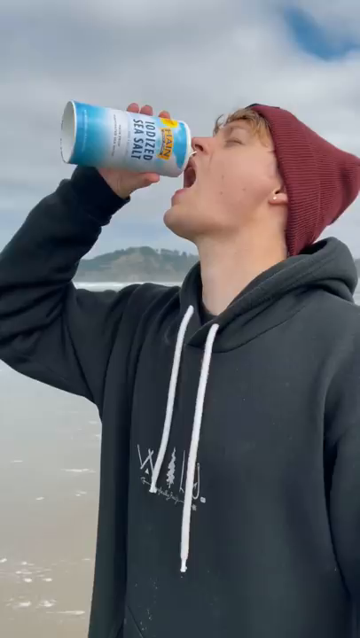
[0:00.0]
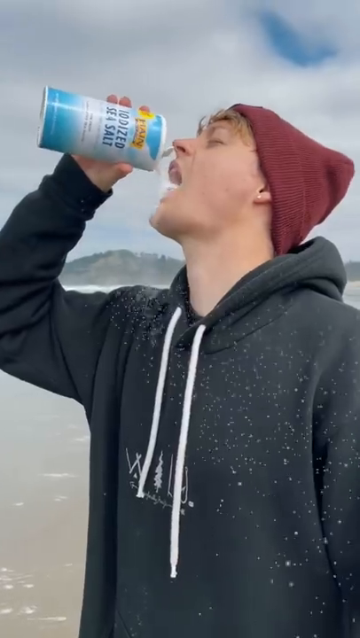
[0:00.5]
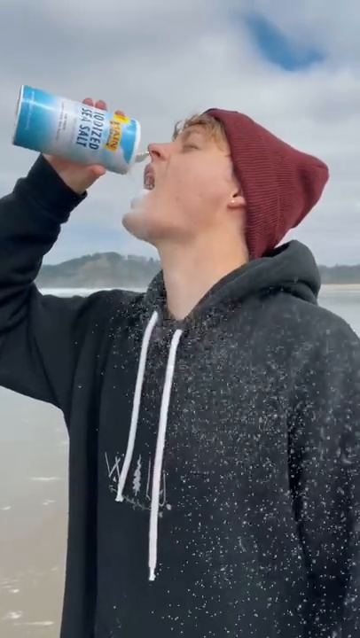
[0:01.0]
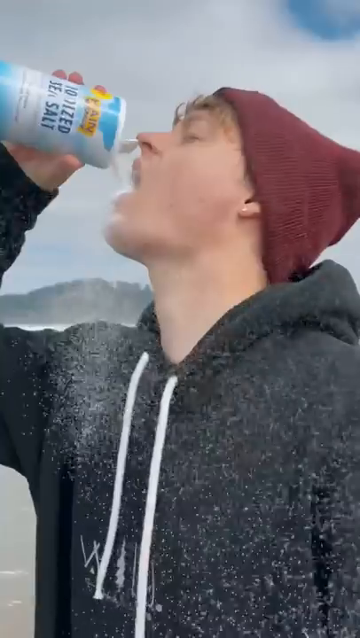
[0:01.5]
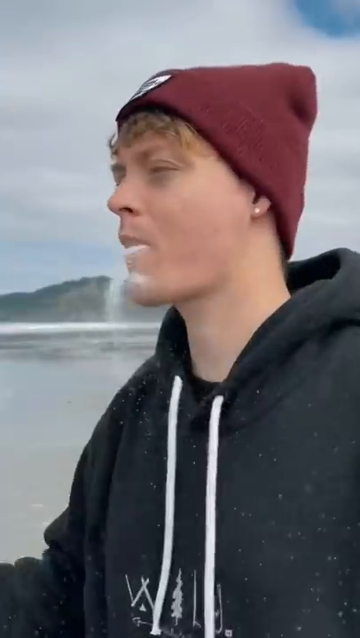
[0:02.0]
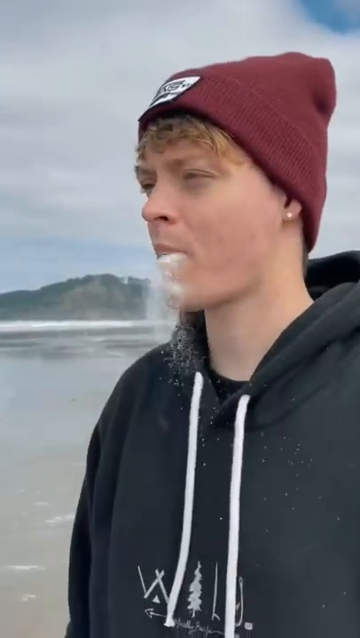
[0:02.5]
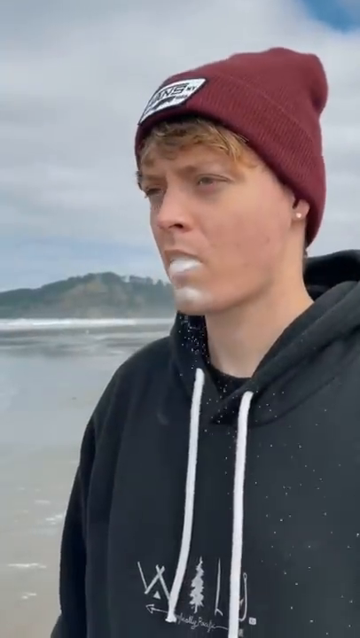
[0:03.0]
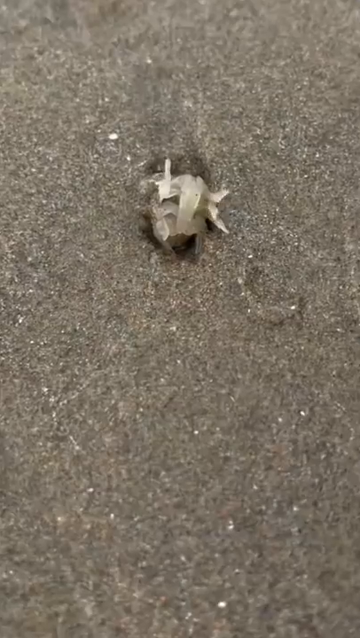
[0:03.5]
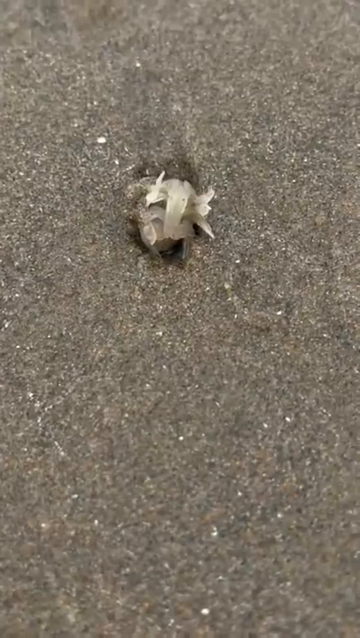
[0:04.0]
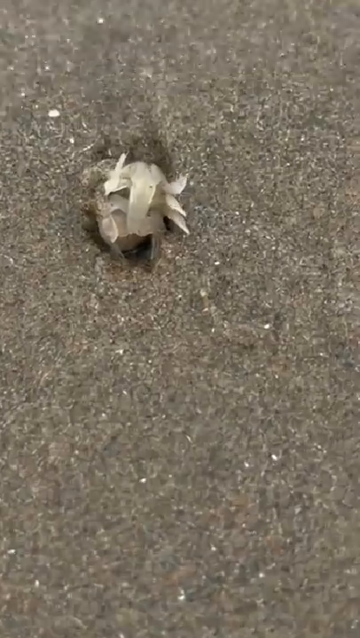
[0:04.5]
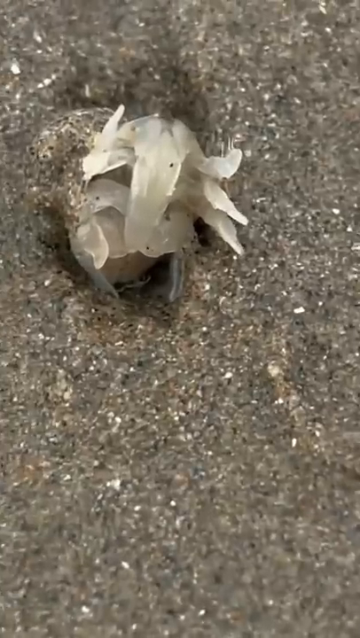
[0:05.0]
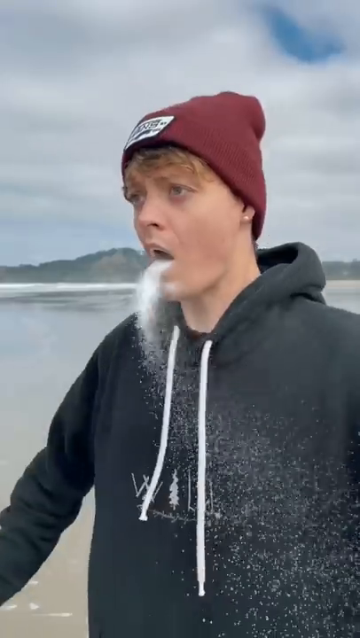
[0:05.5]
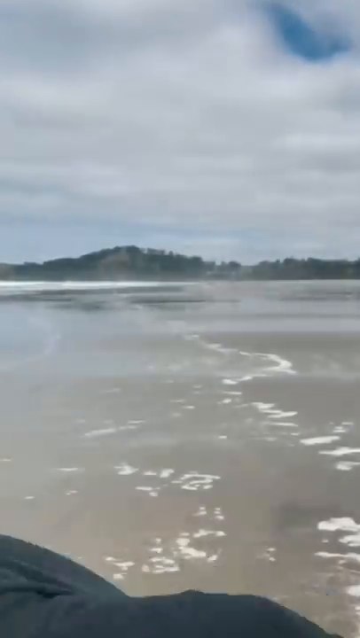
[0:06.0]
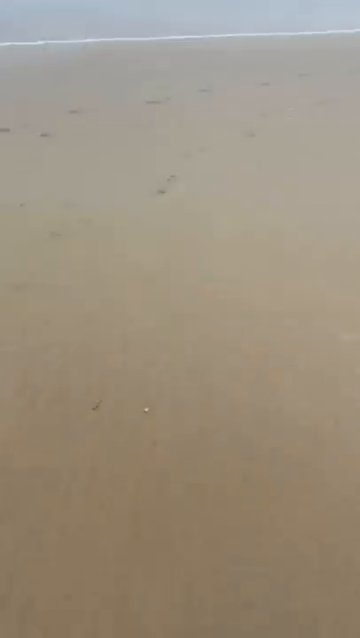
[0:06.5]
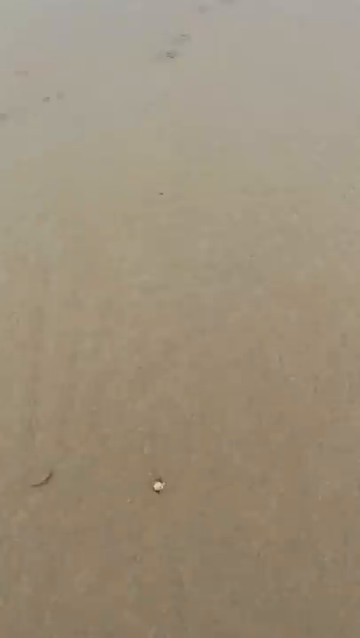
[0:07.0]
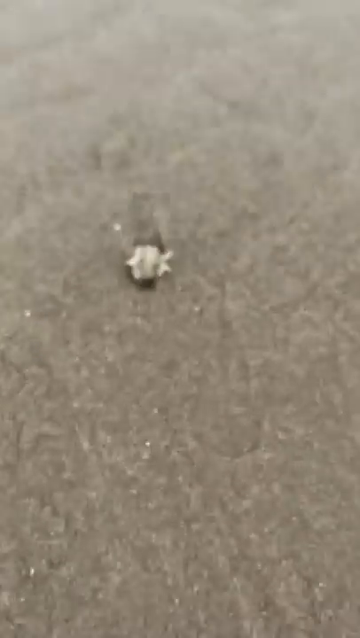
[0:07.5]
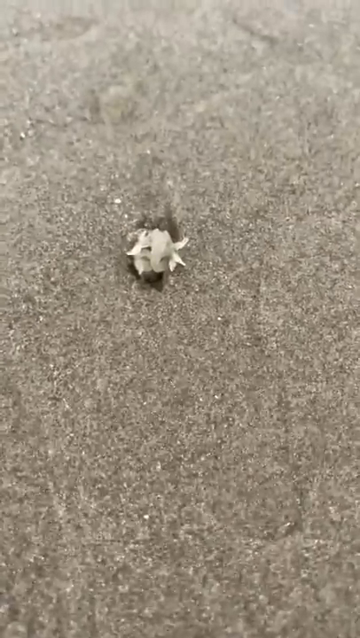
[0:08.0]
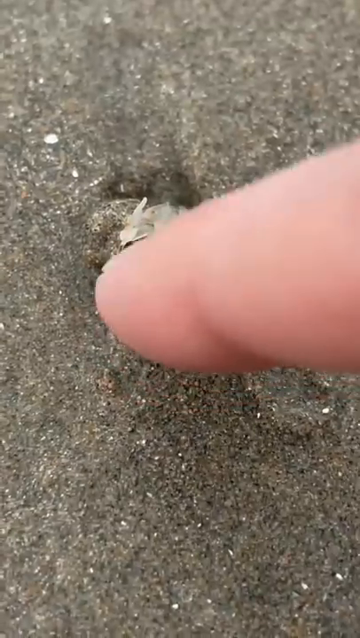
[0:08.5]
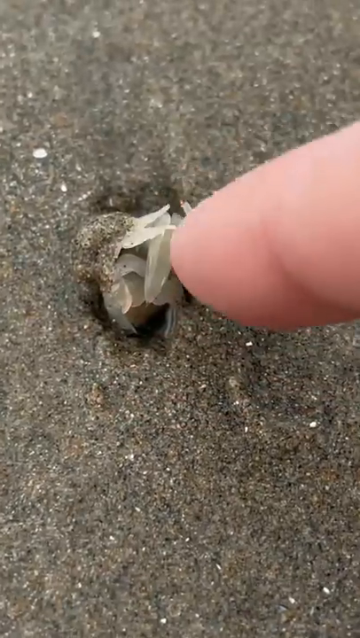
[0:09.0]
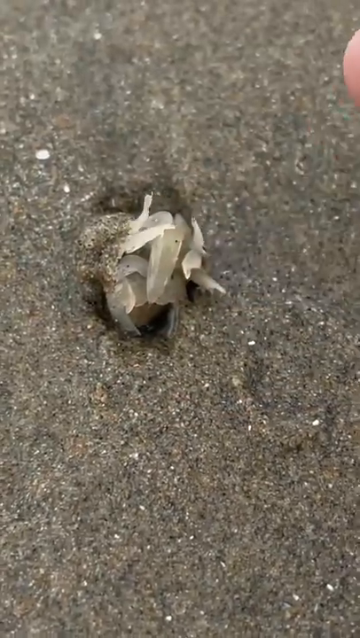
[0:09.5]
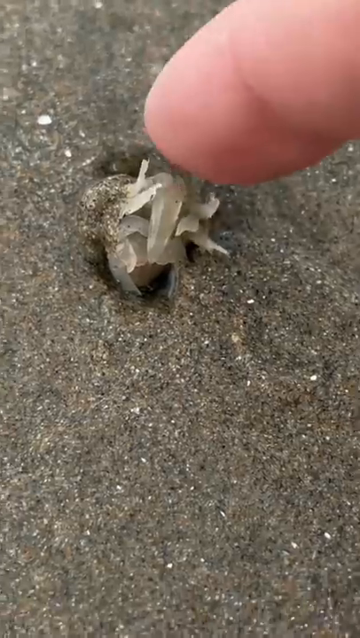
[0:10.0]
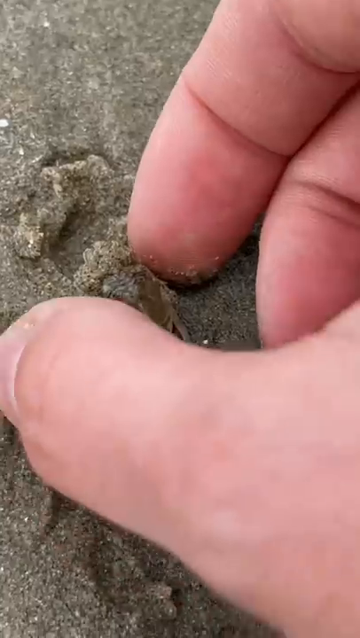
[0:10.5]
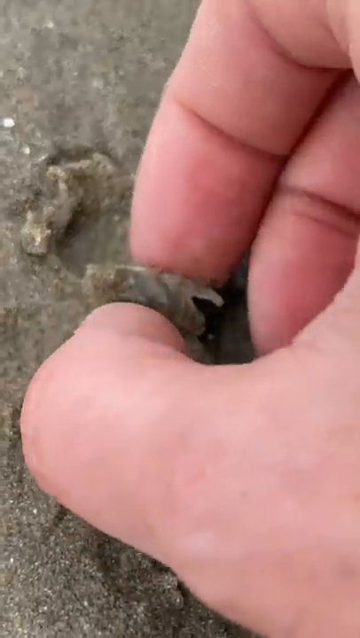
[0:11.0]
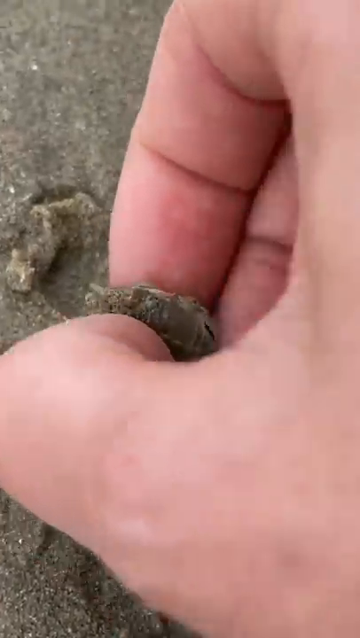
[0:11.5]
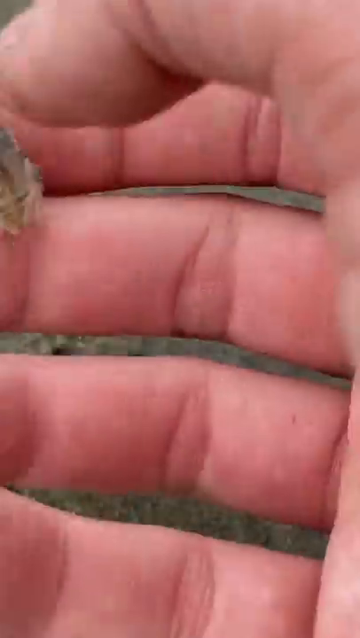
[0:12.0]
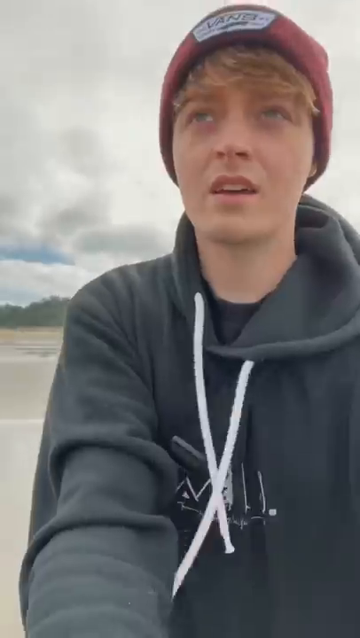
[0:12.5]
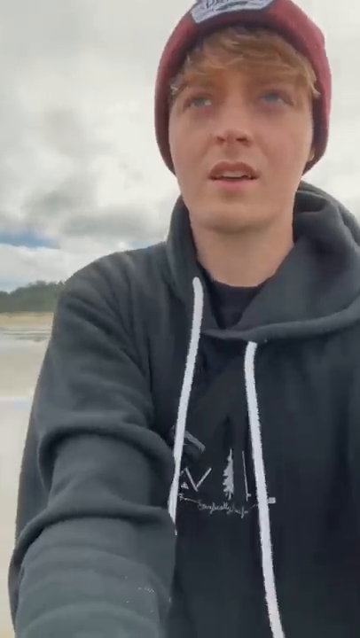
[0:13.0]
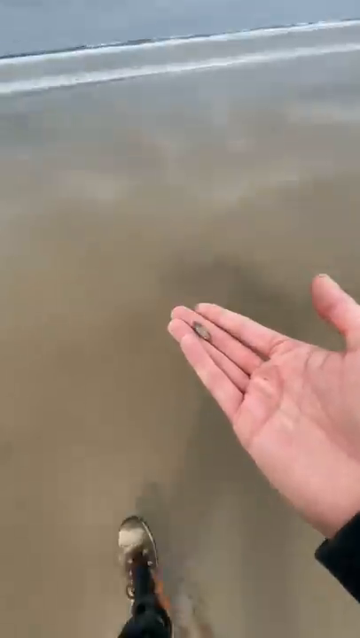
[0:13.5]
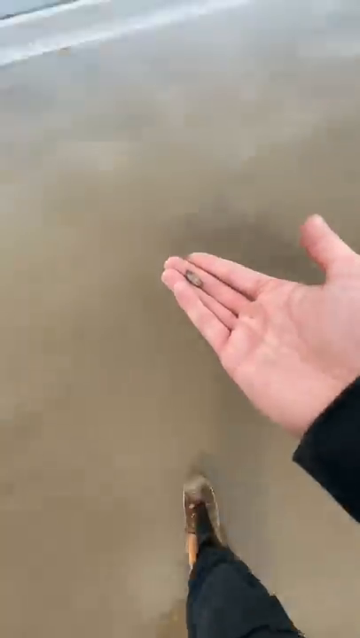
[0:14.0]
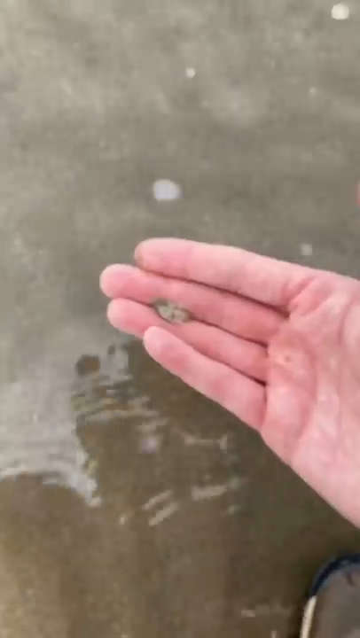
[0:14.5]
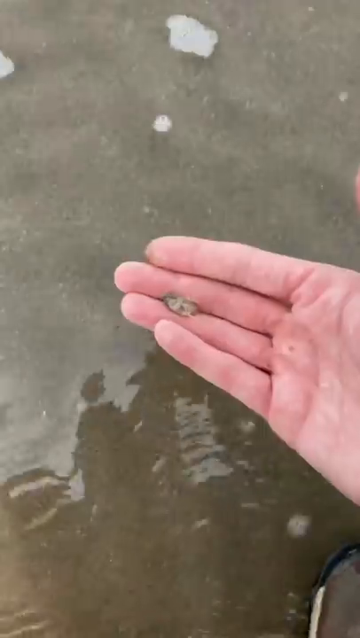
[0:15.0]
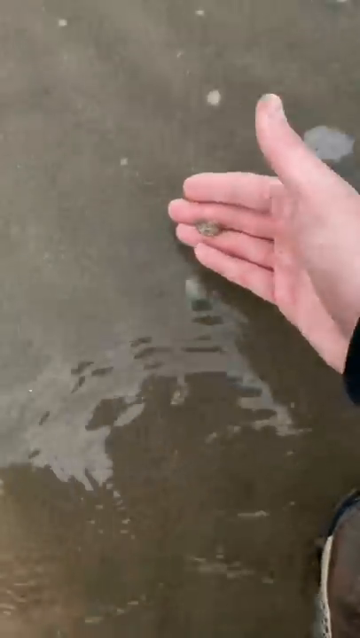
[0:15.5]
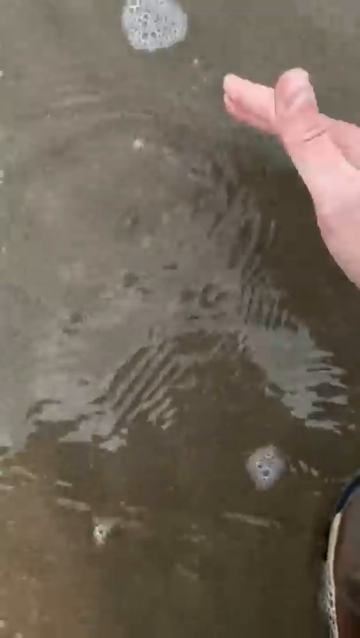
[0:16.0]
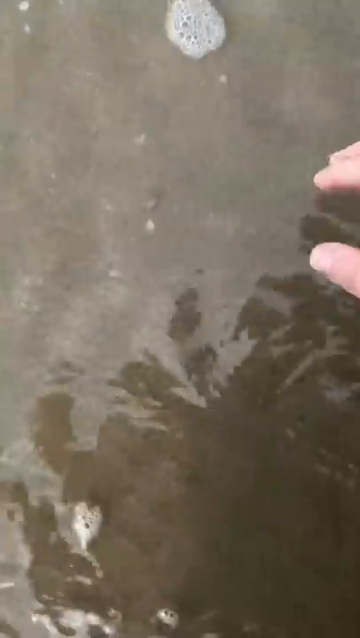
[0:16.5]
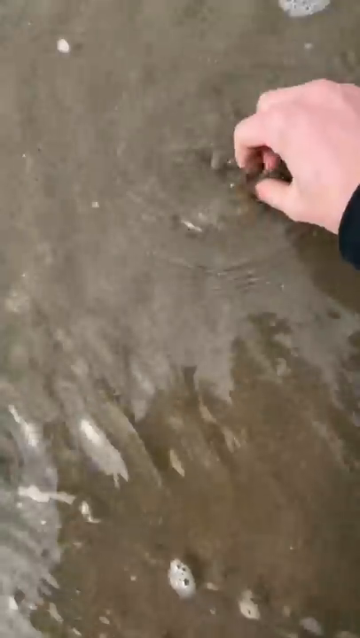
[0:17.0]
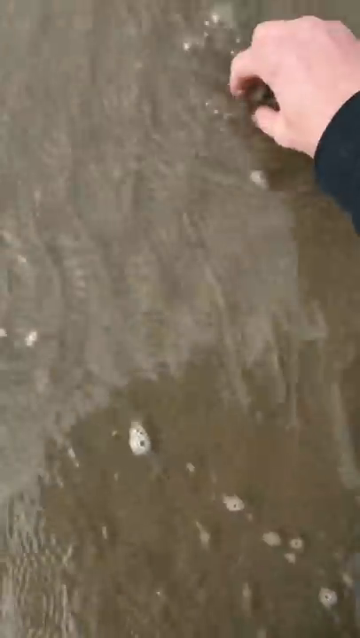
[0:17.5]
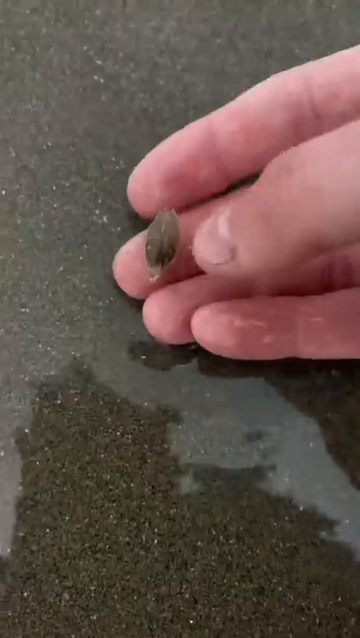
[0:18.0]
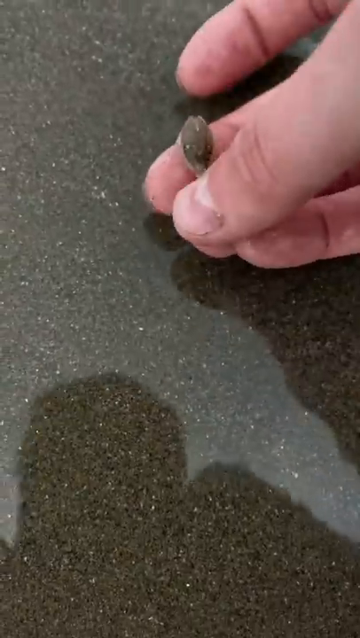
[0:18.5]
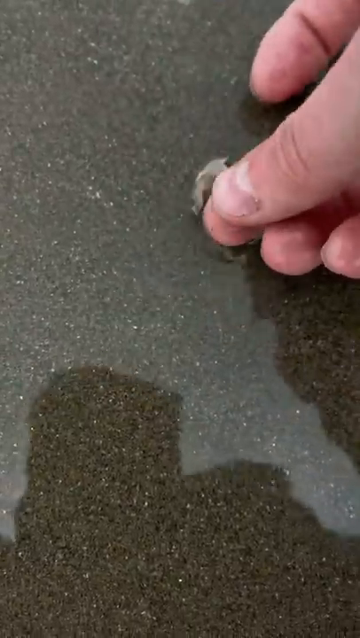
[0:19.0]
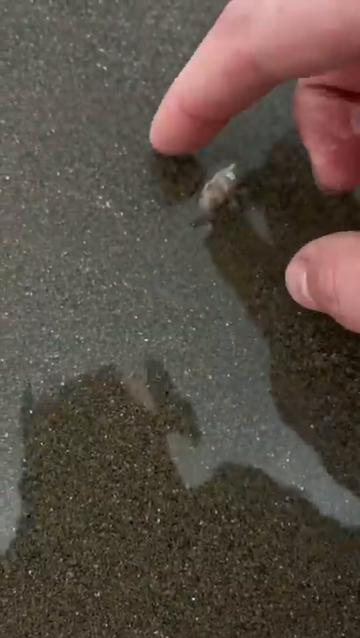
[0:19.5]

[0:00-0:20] A young man is on a beach on a somewhat cloudy day, with a little blue sky showing and a mountain in the background. He wears a red beanie and a gray hoodie. Seen from the side with his mouth open, he tilts a container of iodized sea salt and pours the salt into his mouth; some of it falls from his mouth like snow, with the mountain somewhat behind him. Standing by the water, he suddenly sees a tiny crab on the seashore turned over on its back, and he attempts to pick it up and put it back in the water. He seems very concerned about the creature.